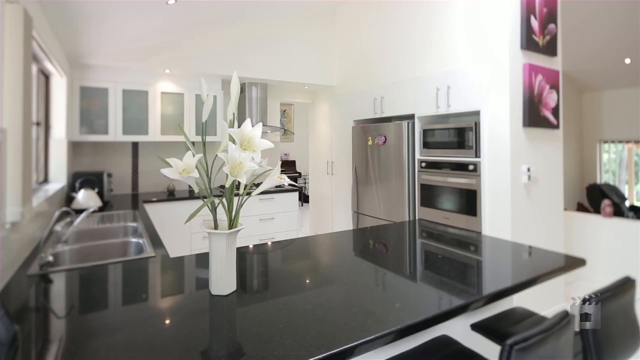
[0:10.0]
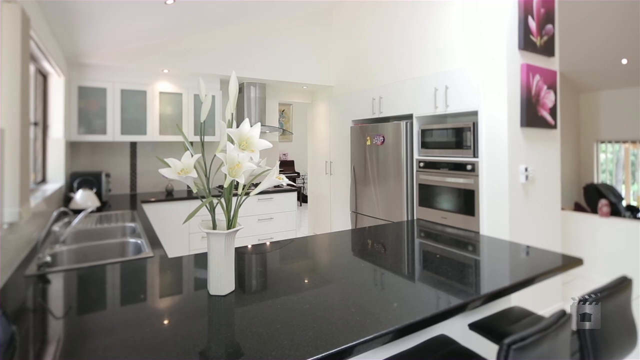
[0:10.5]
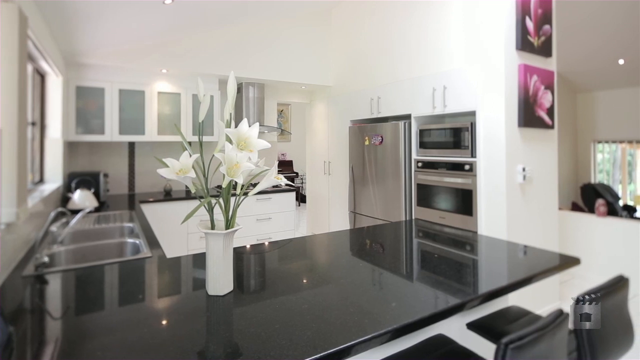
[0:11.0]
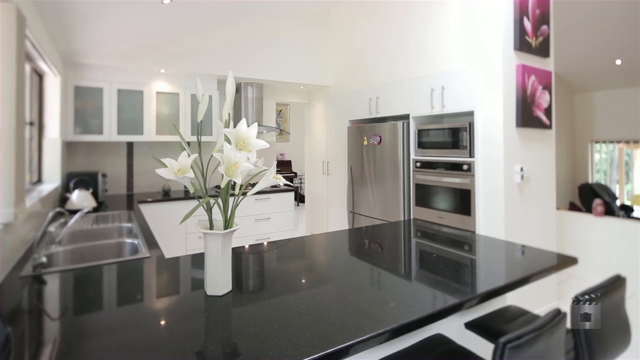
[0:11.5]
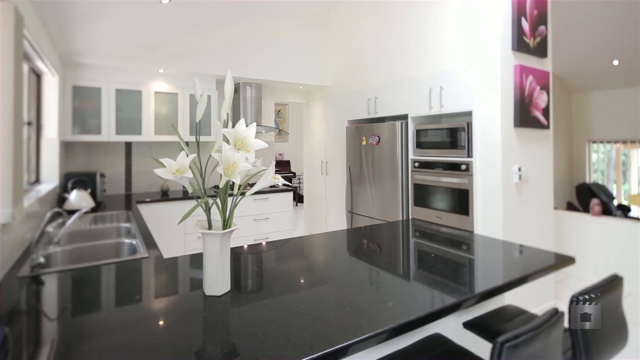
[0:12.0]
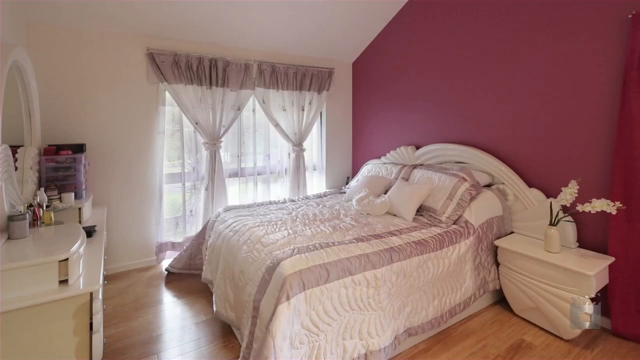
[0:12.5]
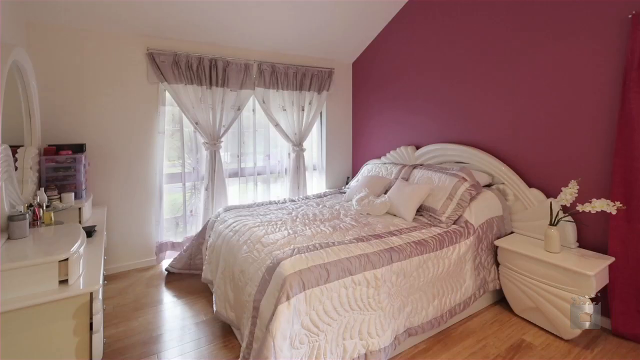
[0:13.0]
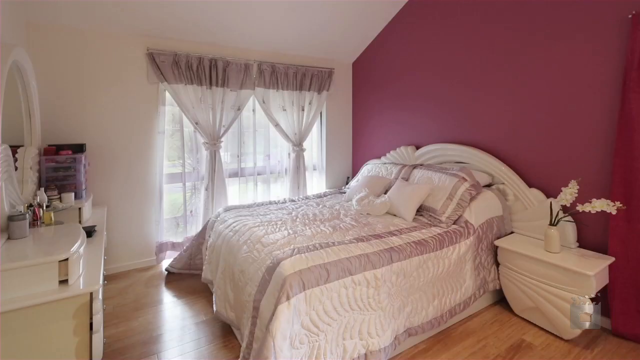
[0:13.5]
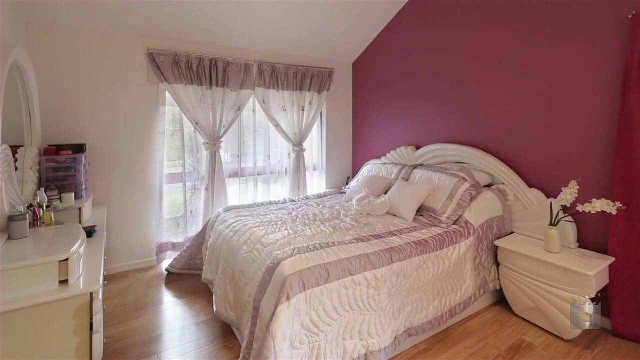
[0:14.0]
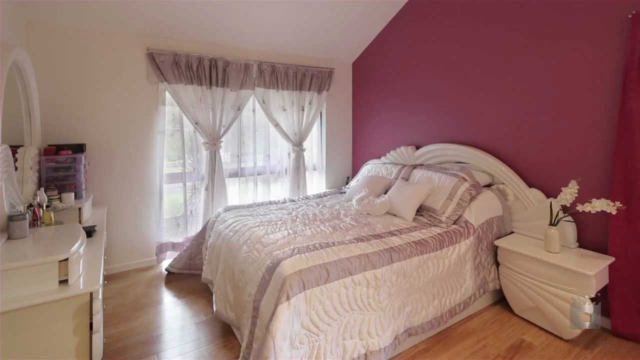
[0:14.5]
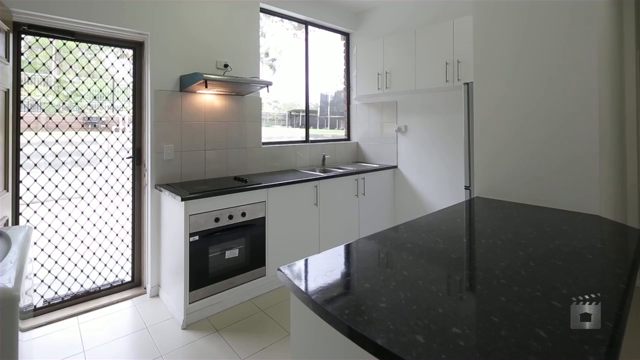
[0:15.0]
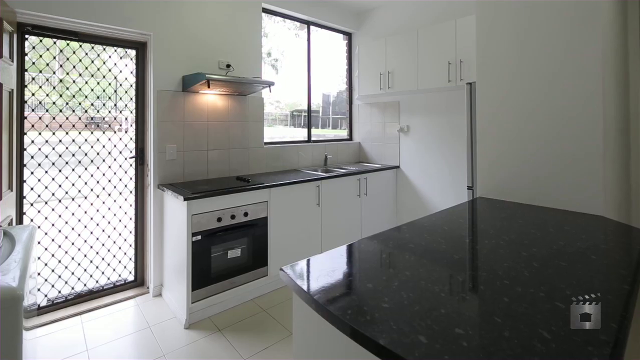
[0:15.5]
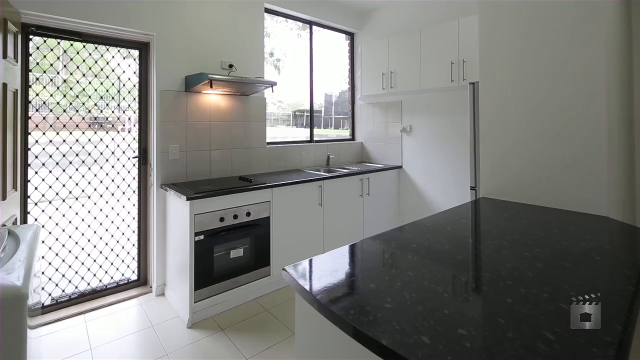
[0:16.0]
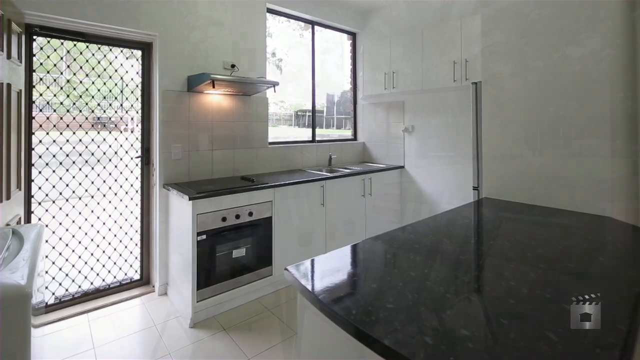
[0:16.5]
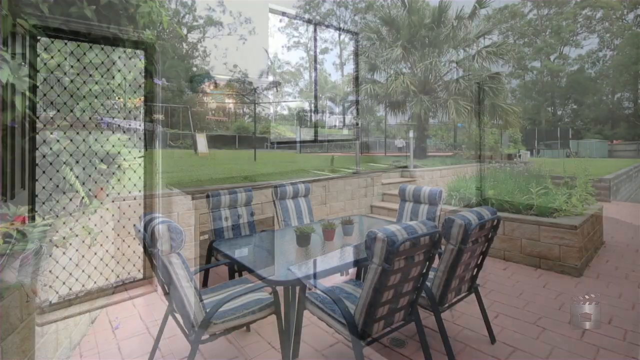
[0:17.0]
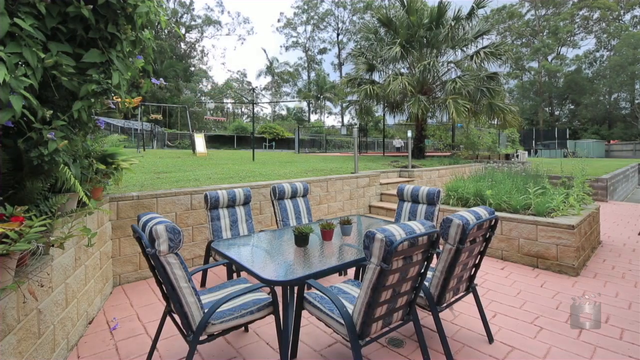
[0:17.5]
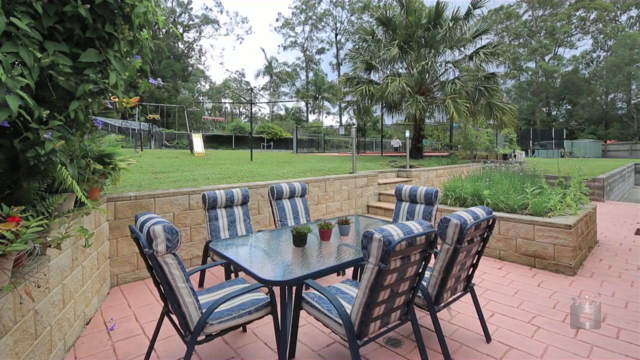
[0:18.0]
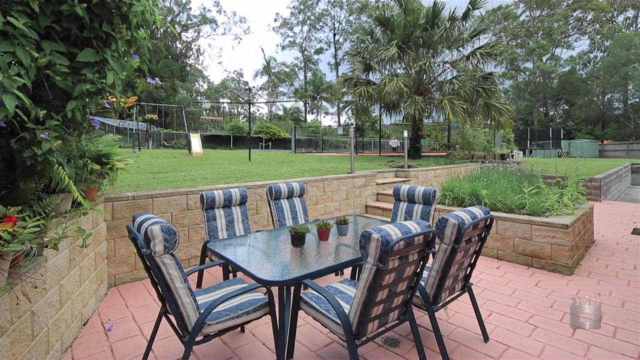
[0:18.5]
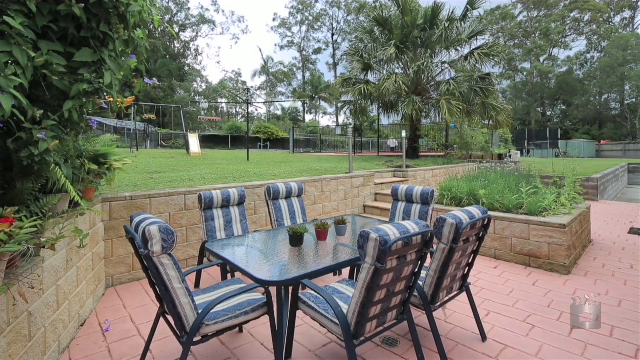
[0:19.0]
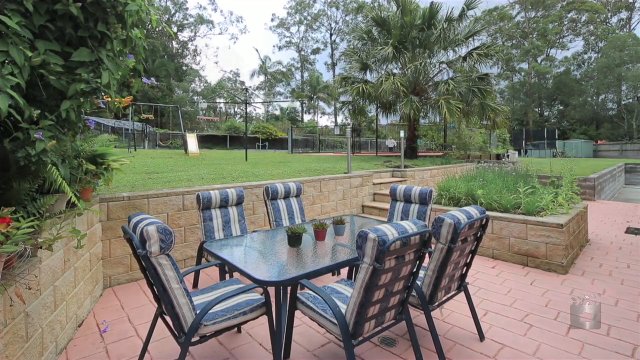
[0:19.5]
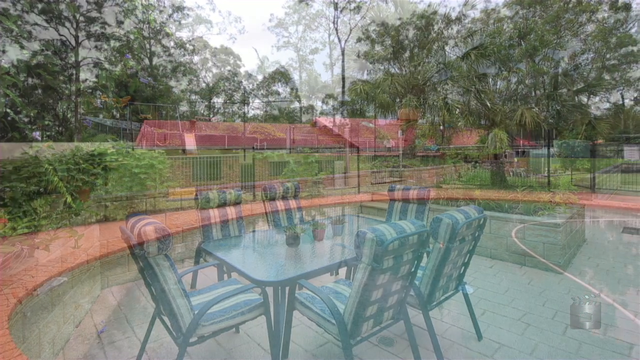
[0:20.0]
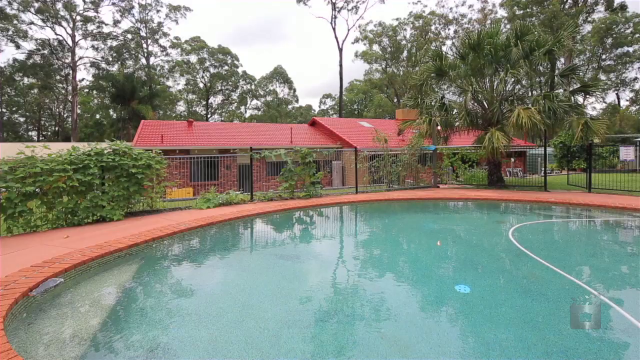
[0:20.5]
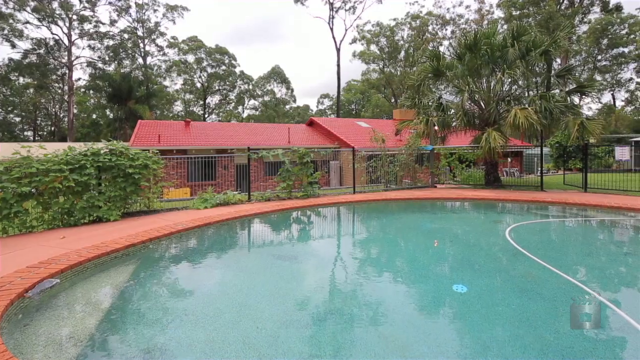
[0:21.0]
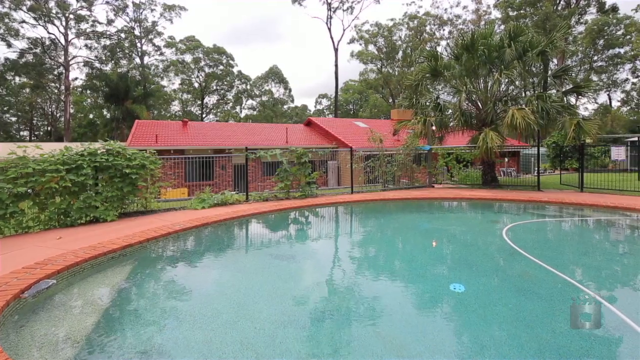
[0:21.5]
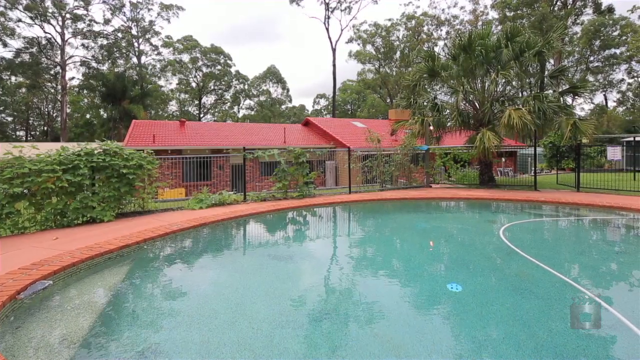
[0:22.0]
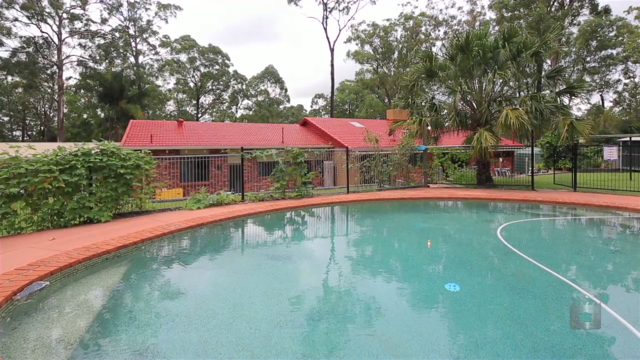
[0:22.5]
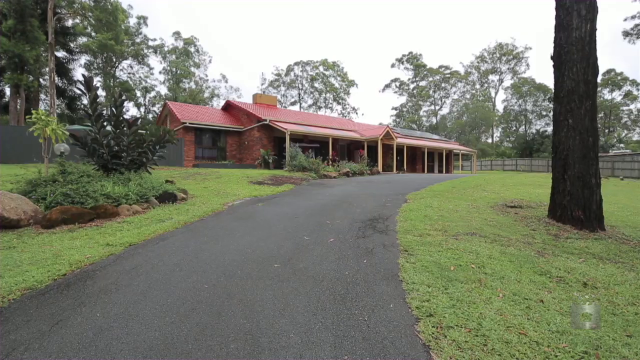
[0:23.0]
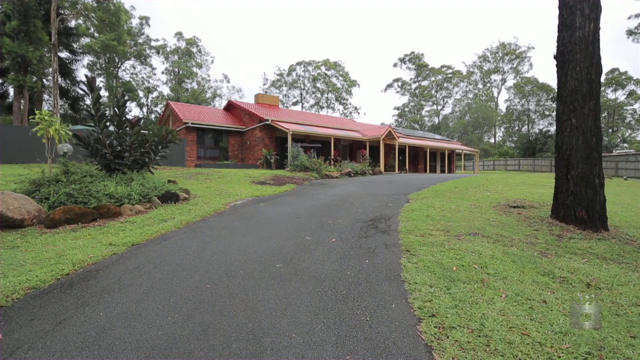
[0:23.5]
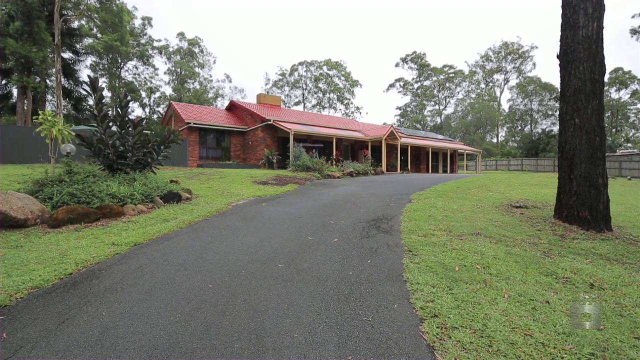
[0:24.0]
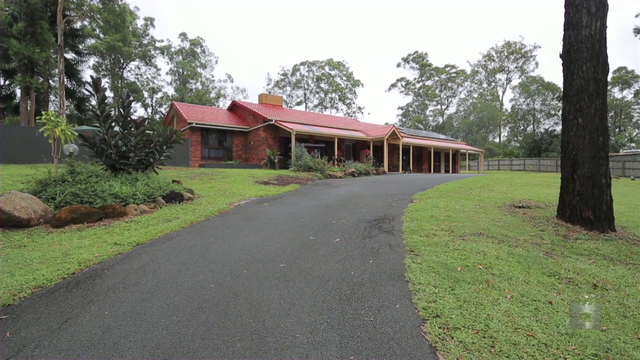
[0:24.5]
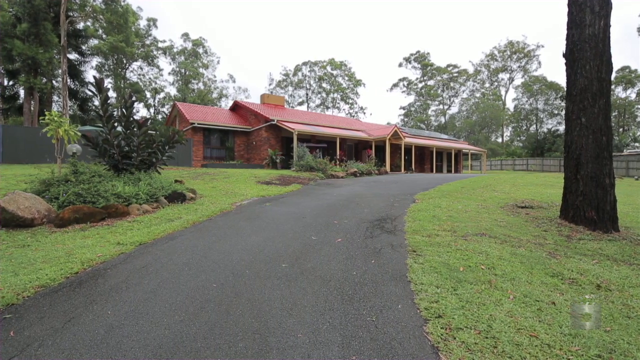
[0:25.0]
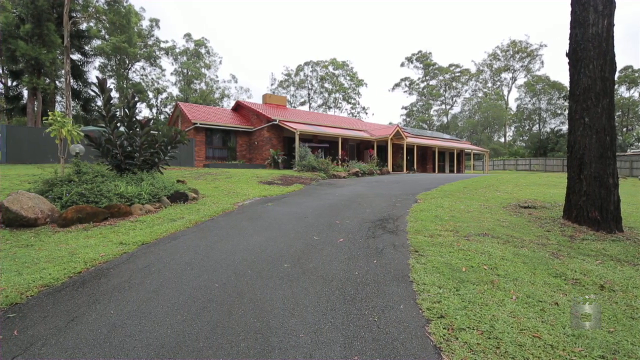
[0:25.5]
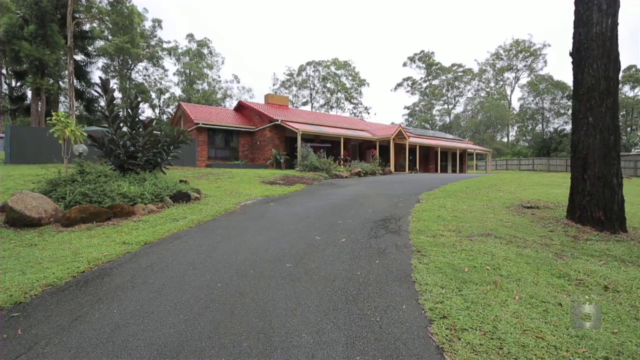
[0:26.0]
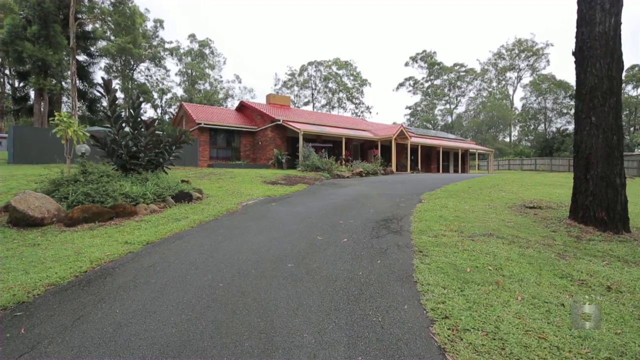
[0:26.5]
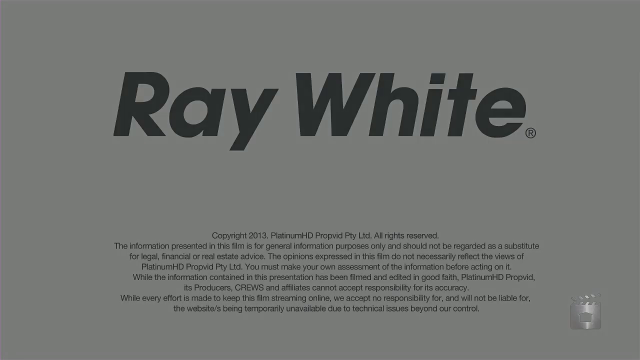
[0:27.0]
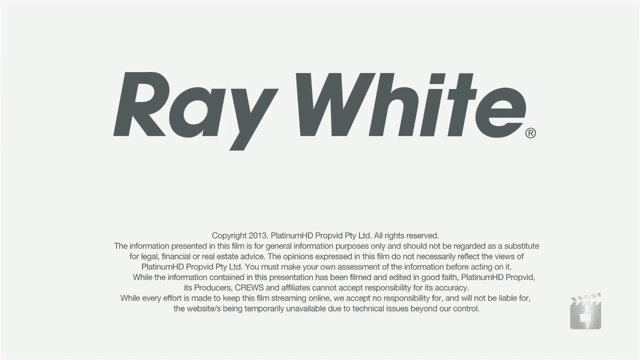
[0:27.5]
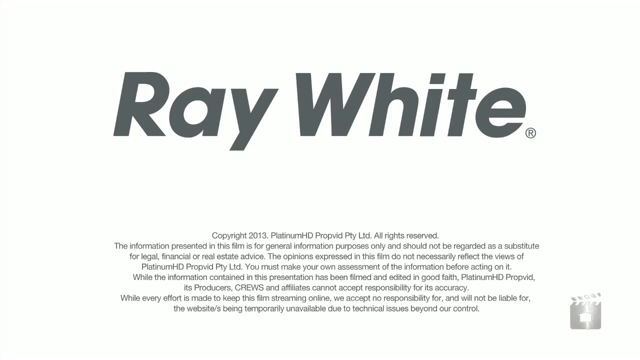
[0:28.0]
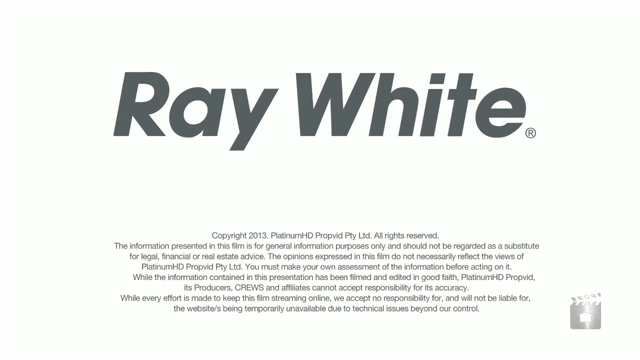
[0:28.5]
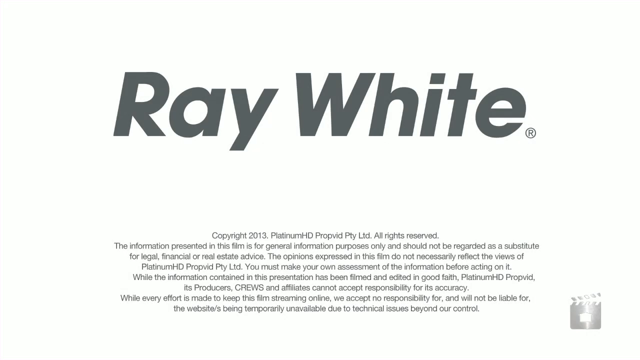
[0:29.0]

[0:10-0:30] The video starts with the outside of a large building. In the bottom middle there is a garden-like area with green bushes and plants, and large red flowery plants growing upwards vertically. The building behind it has brick walls and very clear windows that reflect the lighting off camera. At the top of the frame is a very bright white sky, with some very large trees behind the building. The camera pans very slowly to the right before switching to a different area with a bunch of large trees in the background. The scene switches to a living room with a yellow wall, a black fireplace with what appear to be two little animal statues above it, and two light brown couches with maroon pillows, three on each couch. Next is a kitchen-like area with very reflective black marble countertops and a white vase with white petal flowers. The scene changes to inside a room, then back to the kitchen area. Then an outdoor patio appears with a blue table and blue and white chairs. The scene switches to a large circular pool of a very green-bluish color, then back to an outside view of the same building, before the video ends with the name Ray White.